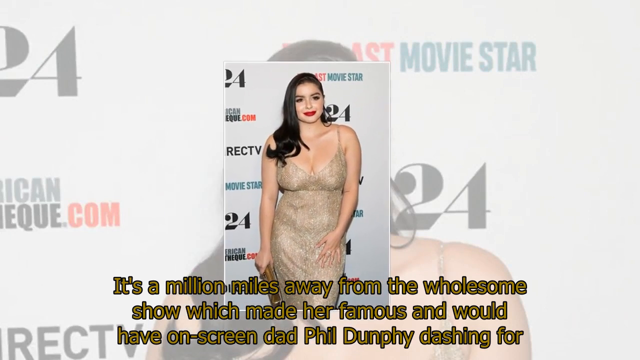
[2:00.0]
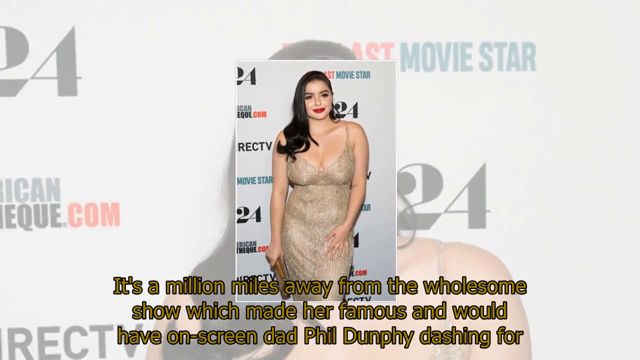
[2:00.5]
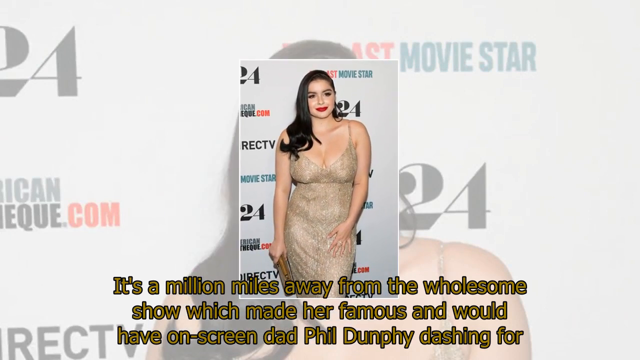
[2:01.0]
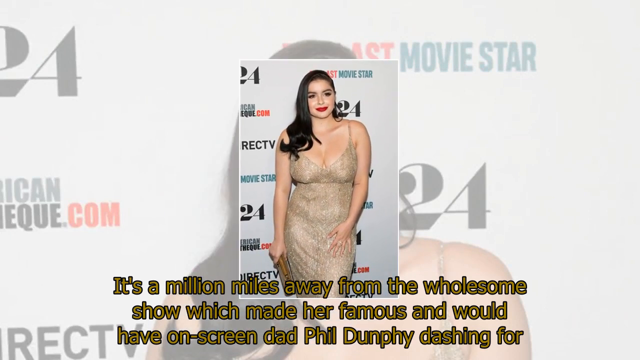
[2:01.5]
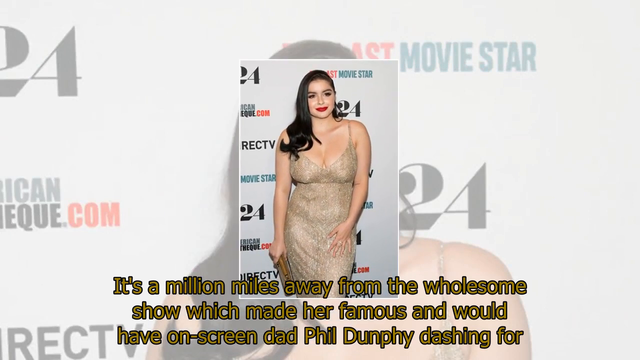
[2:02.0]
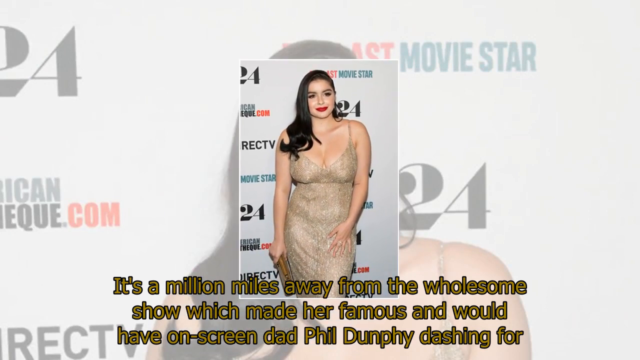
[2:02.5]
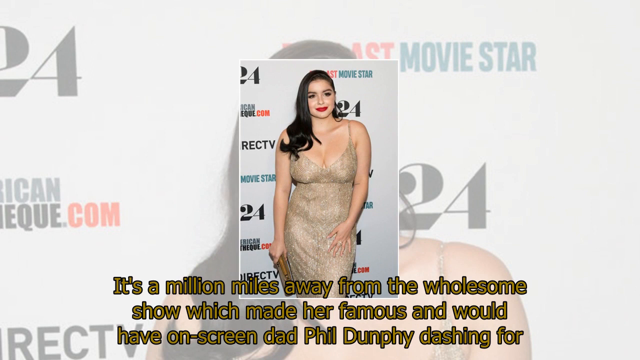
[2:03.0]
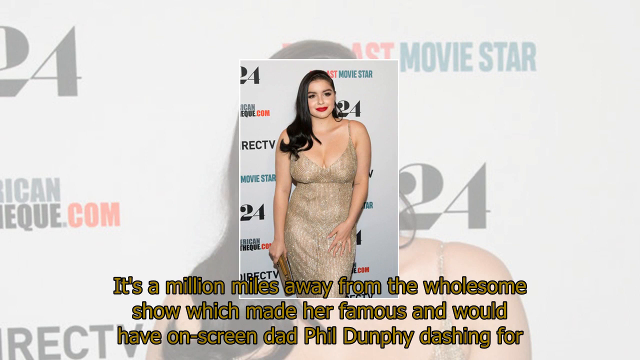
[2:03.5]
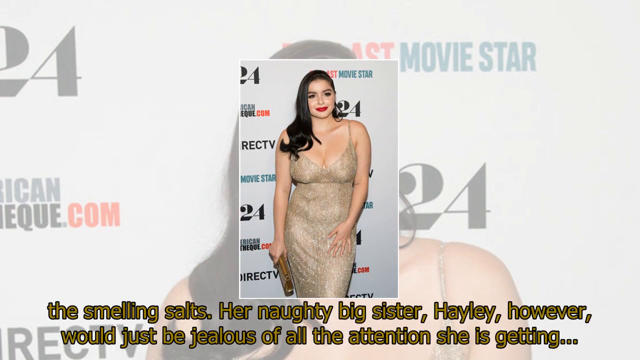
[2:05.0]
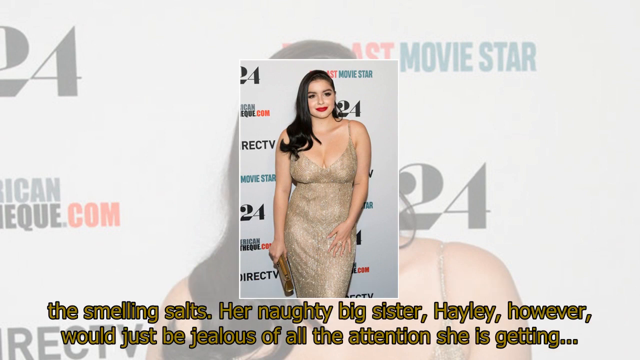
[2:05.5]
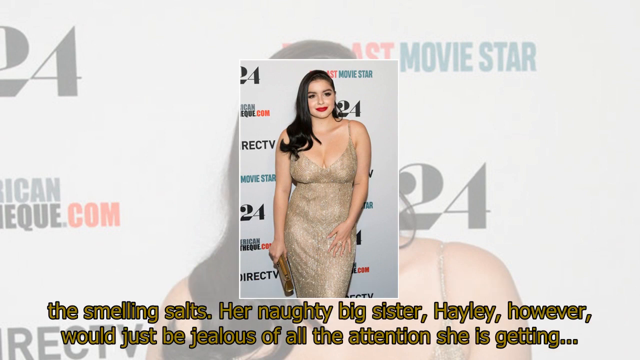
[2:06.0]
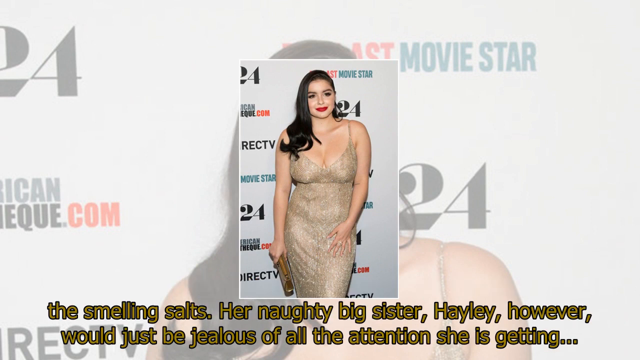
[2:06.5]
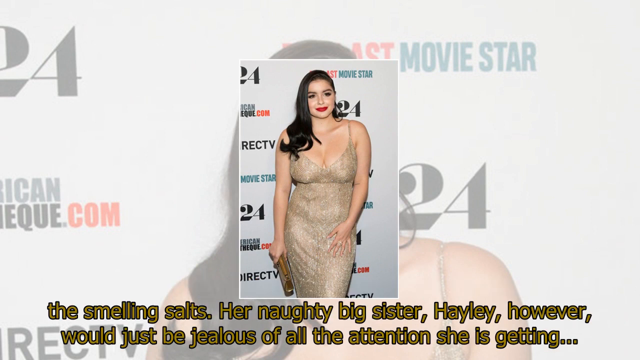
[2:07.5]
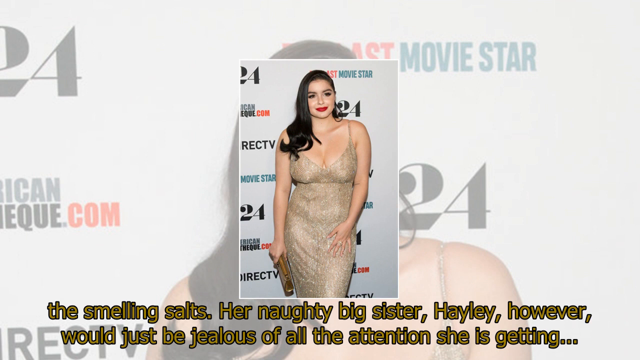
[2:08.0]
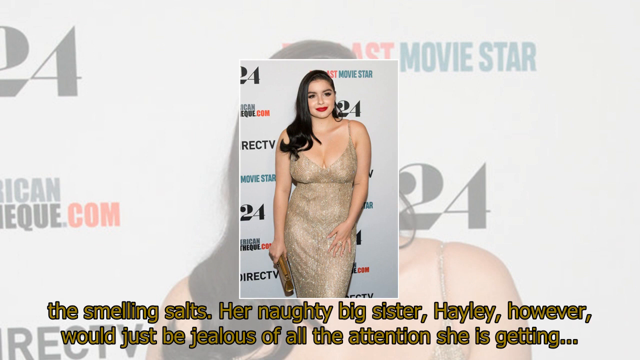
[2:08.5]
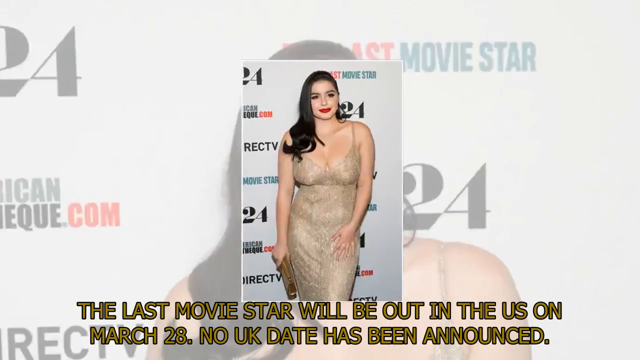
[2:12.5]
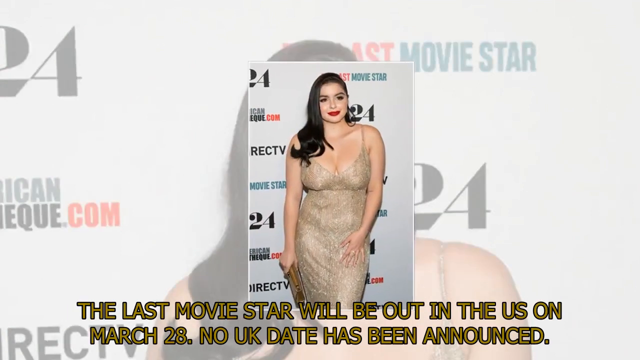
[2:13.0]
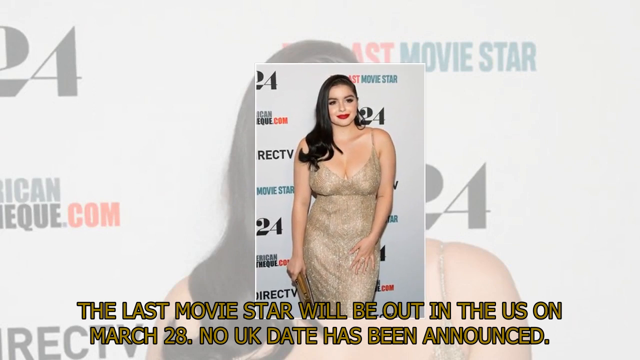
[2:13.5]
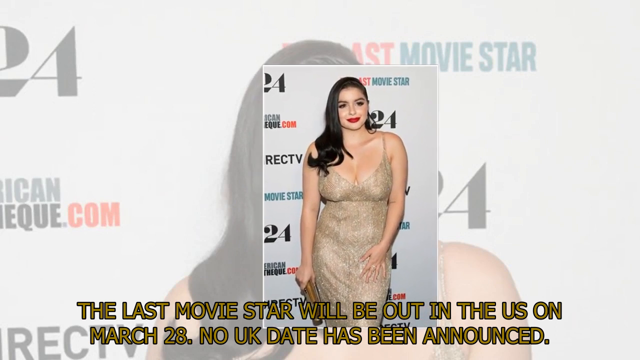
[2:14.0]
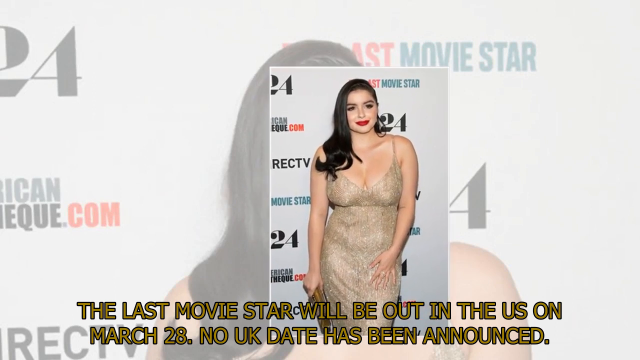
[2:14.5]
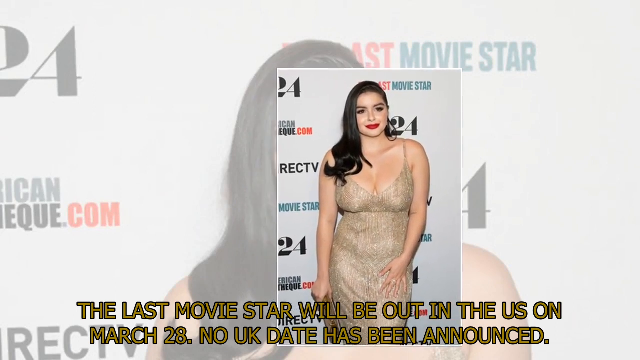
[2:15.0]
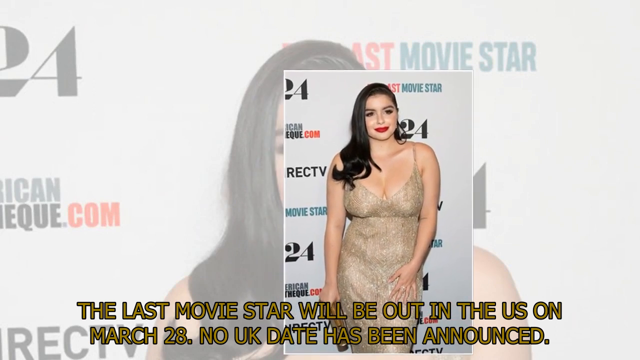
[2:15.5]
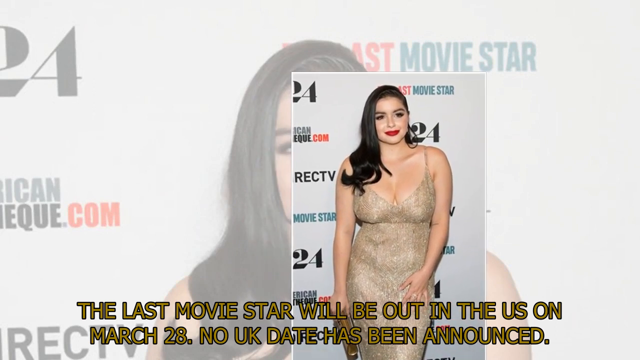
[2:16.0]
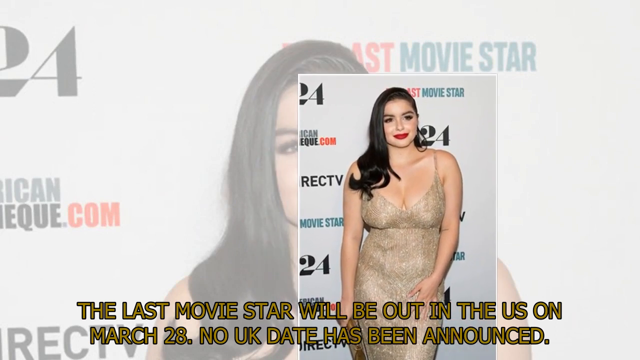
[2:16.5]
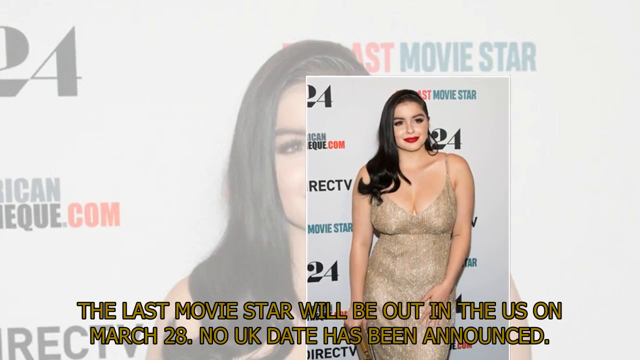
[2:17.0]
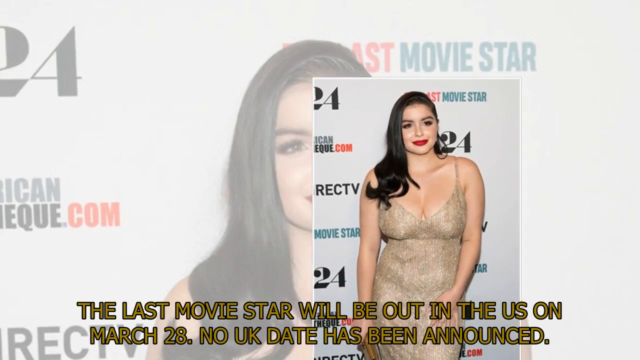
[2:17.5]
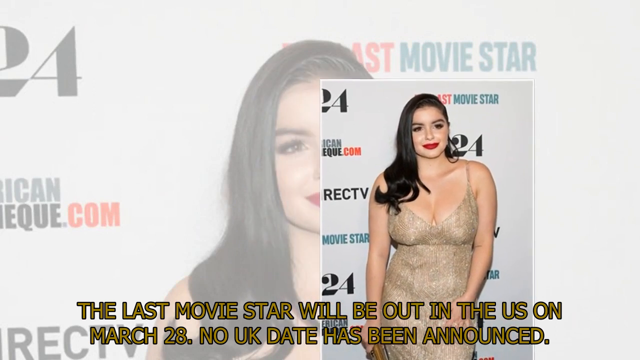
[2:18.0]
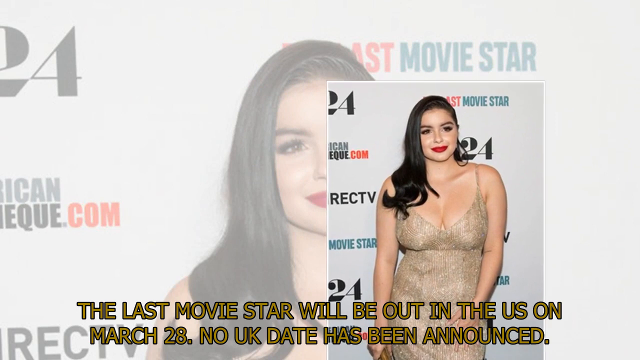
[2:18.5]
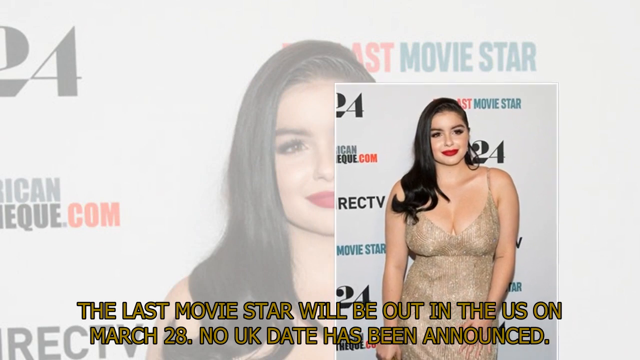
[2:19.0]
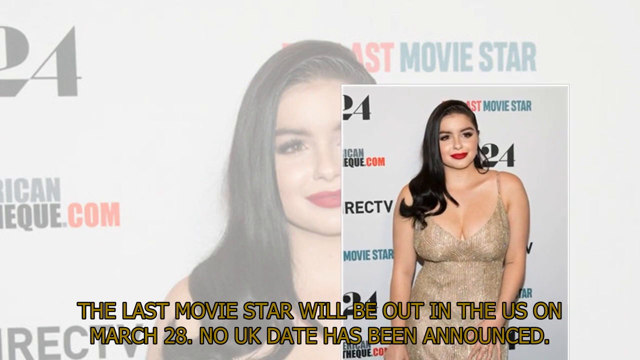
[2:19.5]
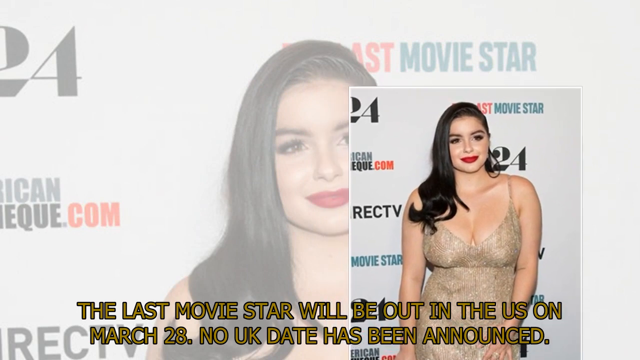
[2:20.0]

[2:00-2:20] Text states that her big sister may be jealous of the attention she is getting, and that the movie will be out in the US on March 28th, with no UK date announced. A photo shows her in her dress with her breasts showing and red lipstick. The image is still from DirecTV.